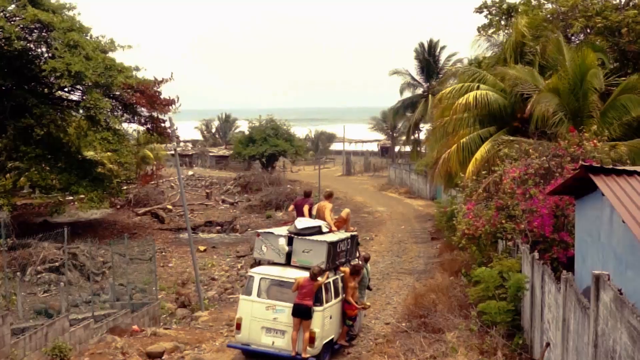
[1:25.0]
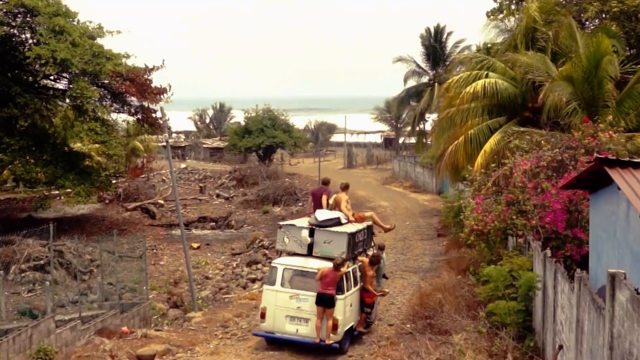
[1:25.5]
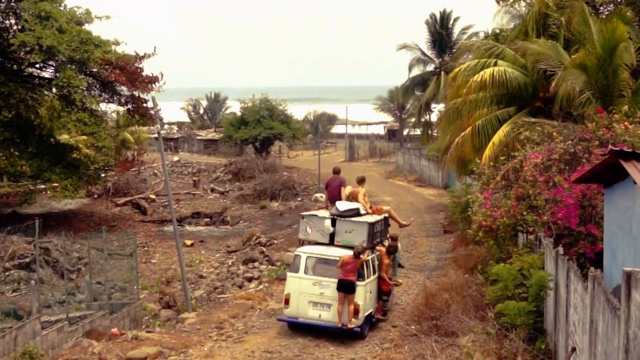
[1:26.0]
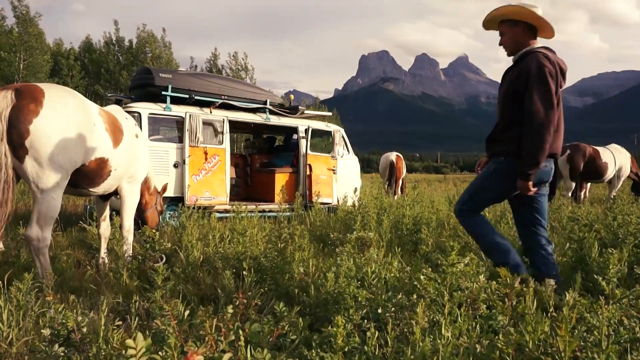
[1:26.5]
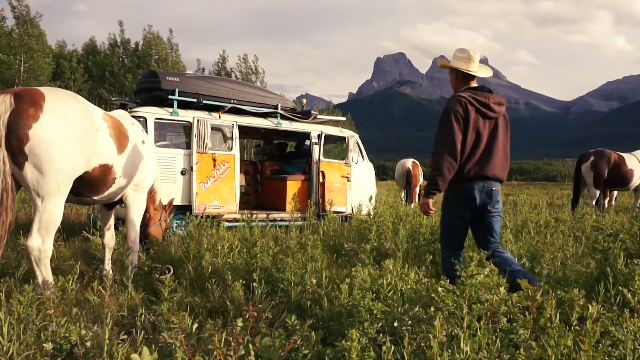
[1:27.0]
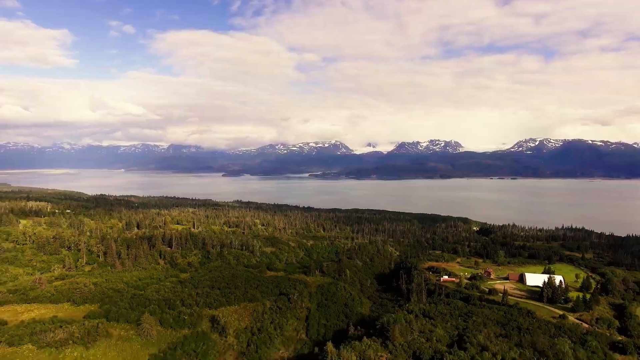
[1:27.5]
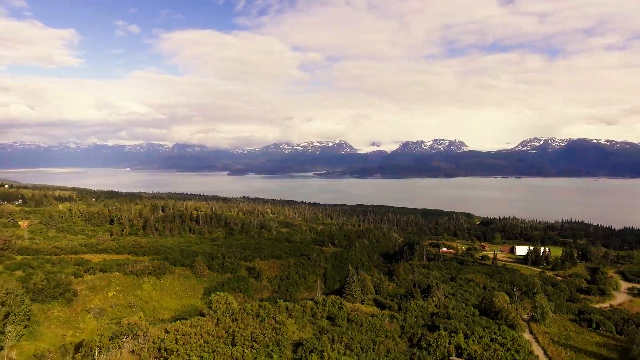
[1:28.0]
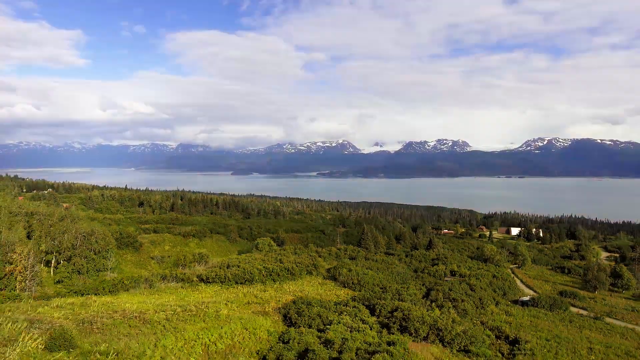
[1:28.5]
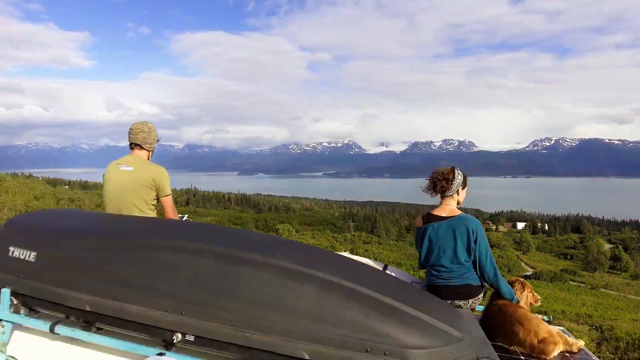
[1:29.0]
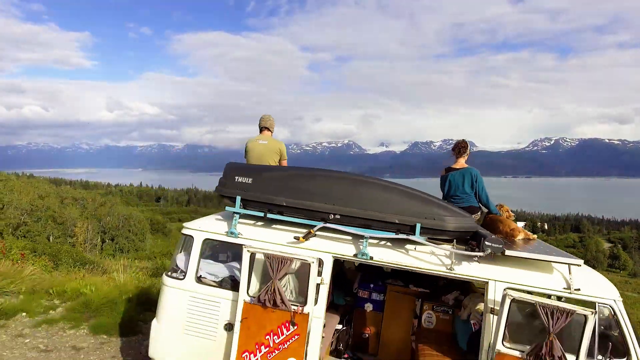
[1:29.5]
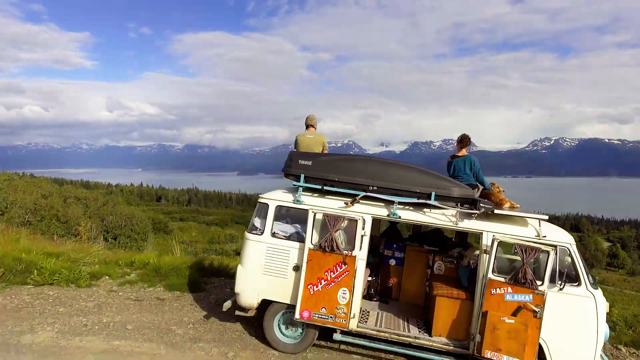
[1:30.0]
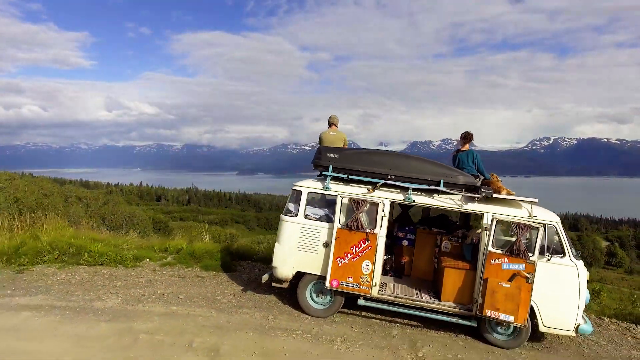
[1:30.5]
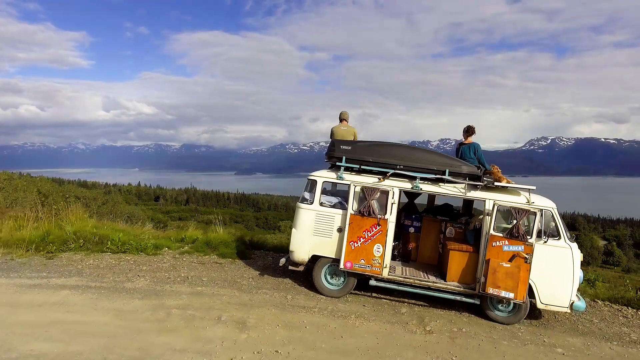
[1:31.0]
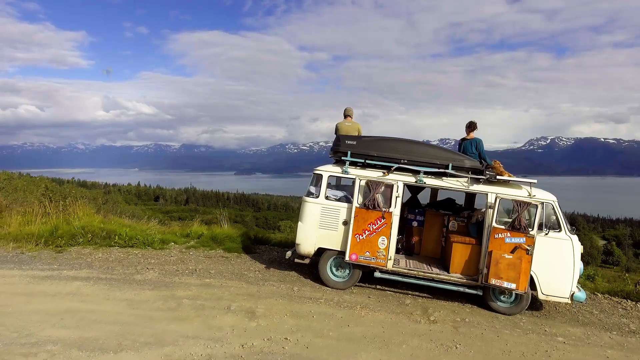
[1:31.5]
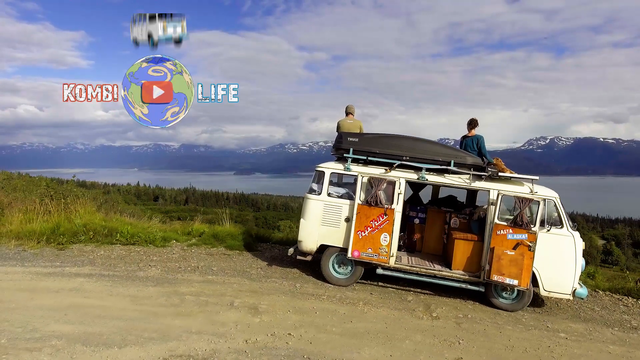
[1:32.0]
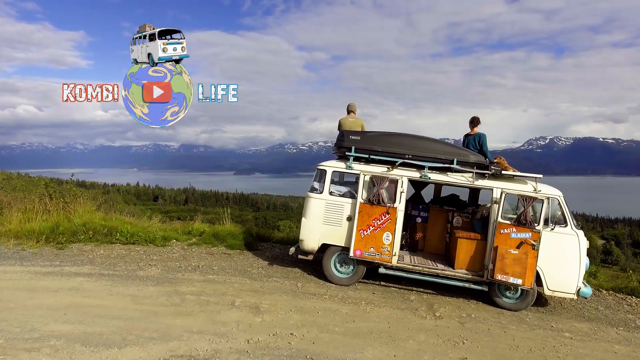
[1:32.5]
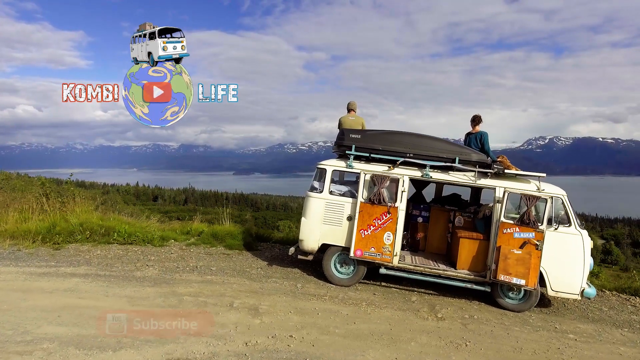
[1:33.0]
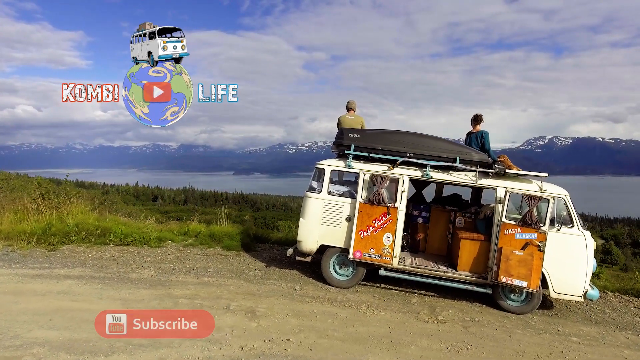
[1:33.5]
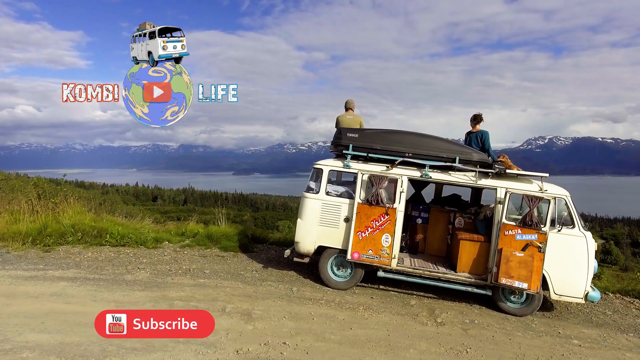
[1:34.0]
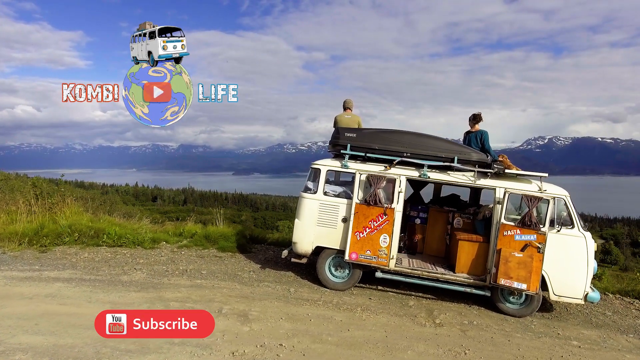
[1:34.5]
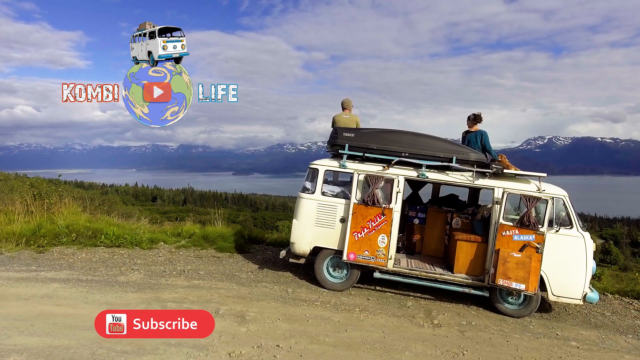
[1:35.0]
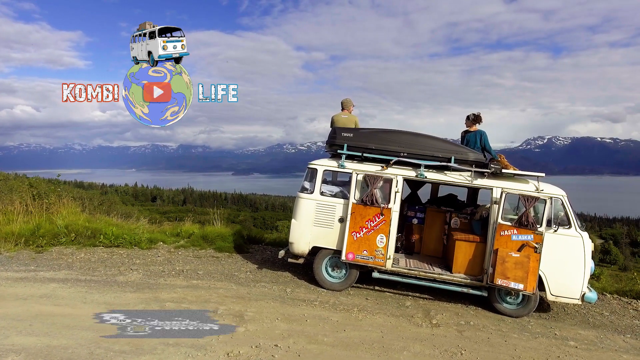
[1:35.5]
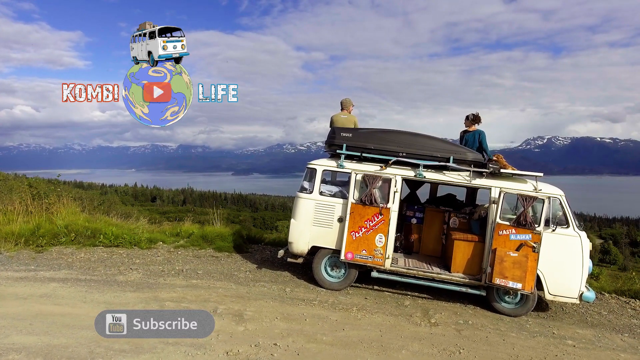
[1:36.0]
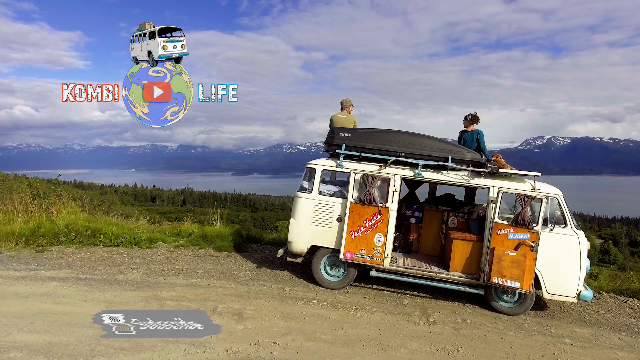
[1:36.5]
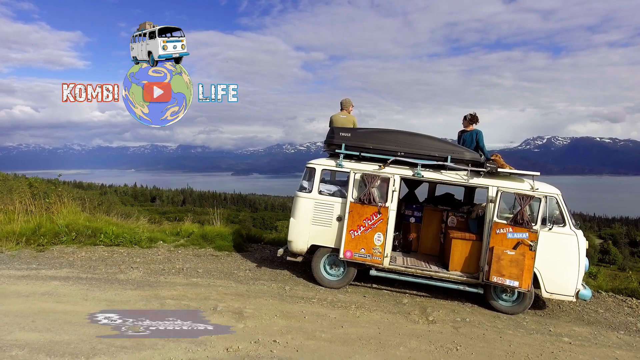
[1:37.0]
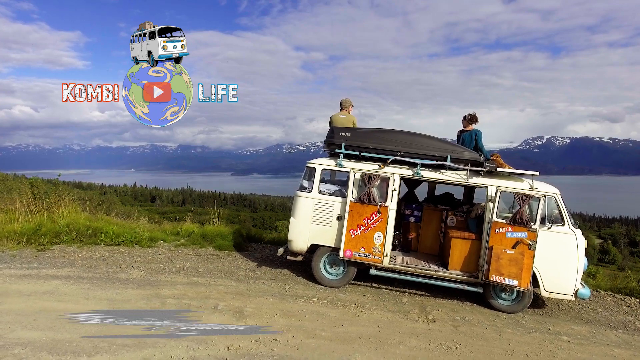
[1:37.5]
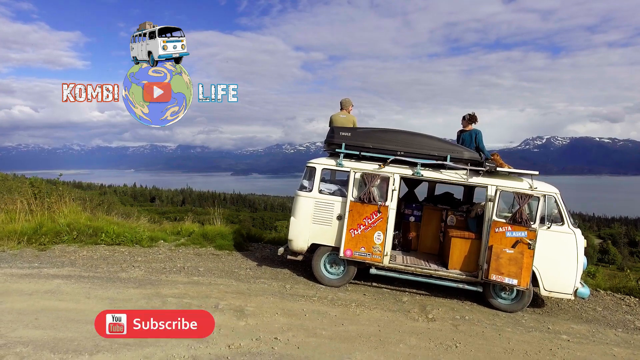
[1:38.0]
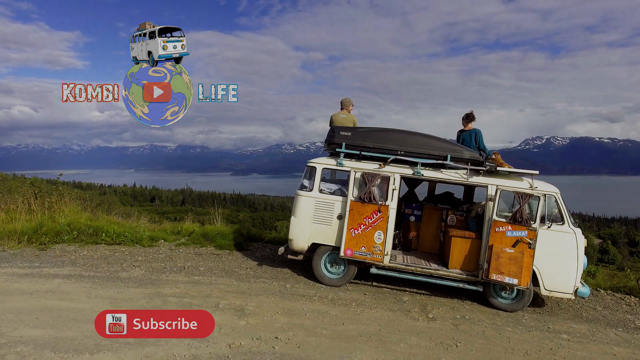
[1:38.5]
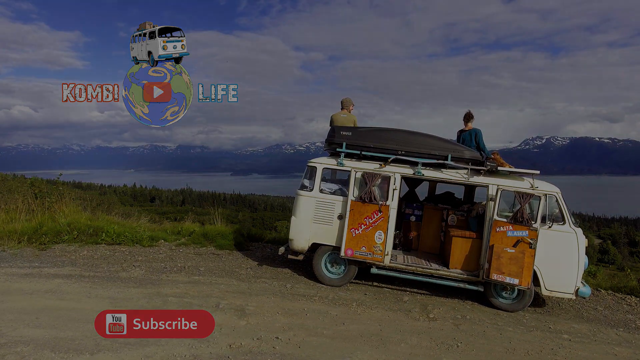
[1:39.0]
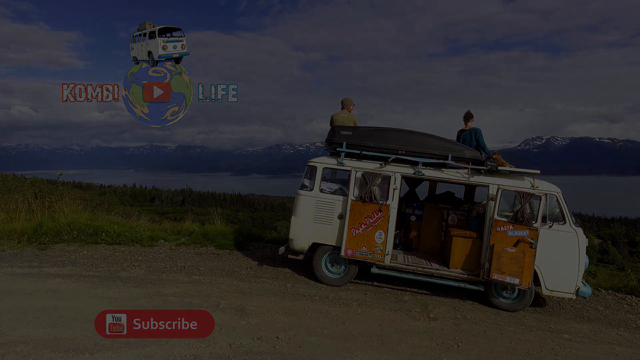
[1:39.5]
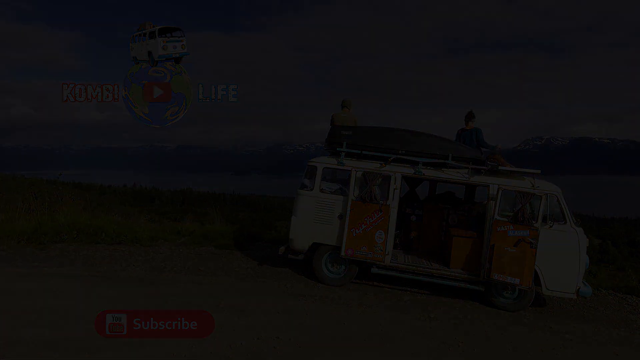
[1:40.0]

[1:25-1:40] The van pulls into a field where there are some cows. The van has a bunch of stuff in it. A cowboy out in the field walks towards the van. Two people sit on top of the van, and Alaska sits on top of the van roof. At different times there are more people and at other times fewer, apparently because Ben picks up people along the way.